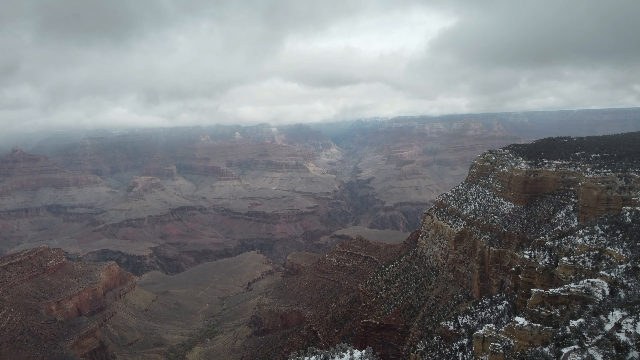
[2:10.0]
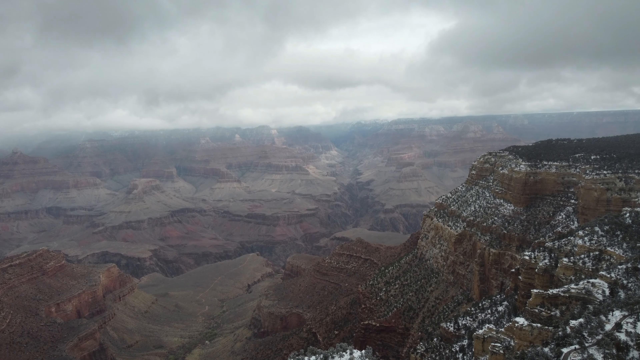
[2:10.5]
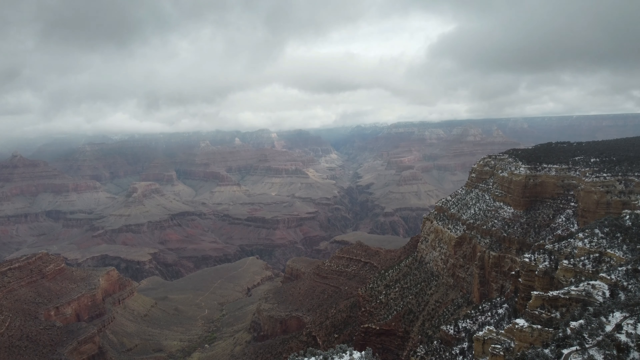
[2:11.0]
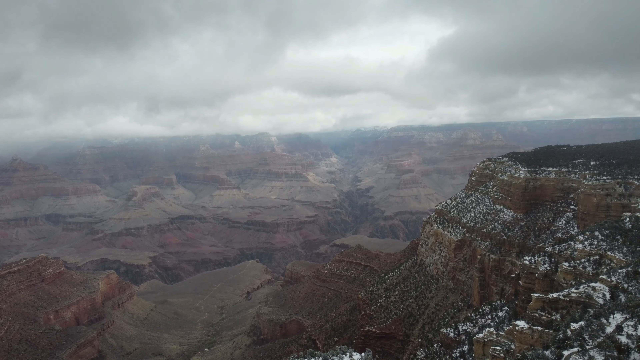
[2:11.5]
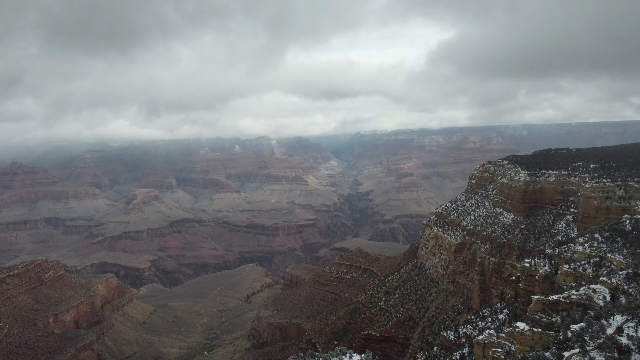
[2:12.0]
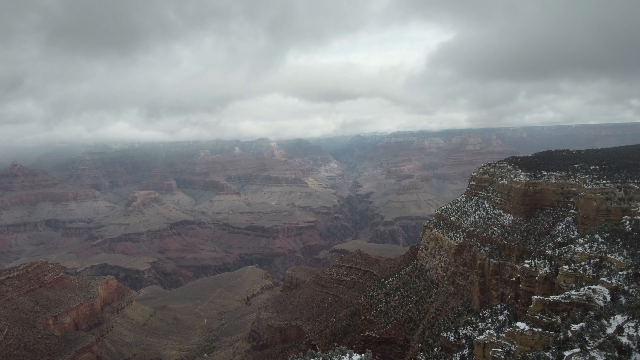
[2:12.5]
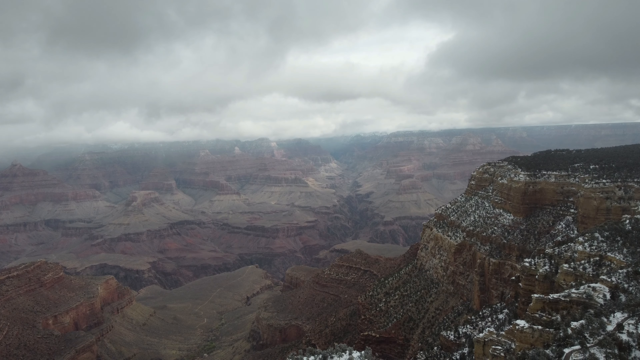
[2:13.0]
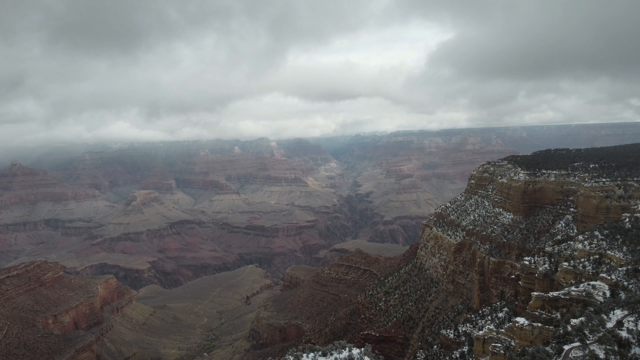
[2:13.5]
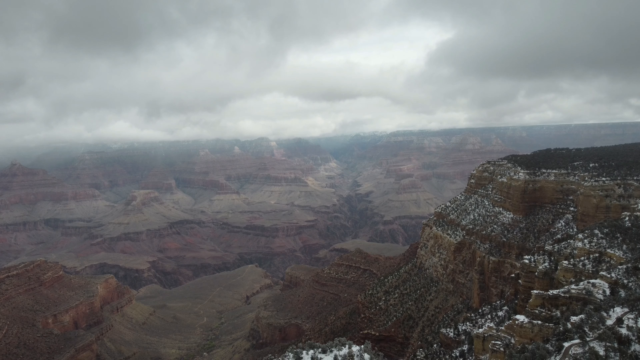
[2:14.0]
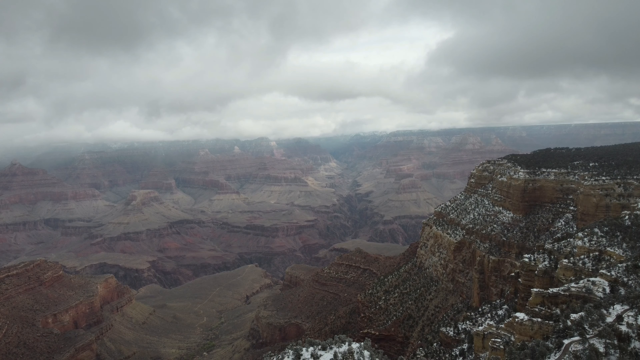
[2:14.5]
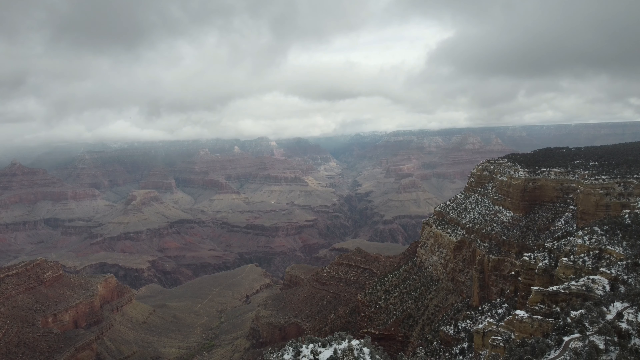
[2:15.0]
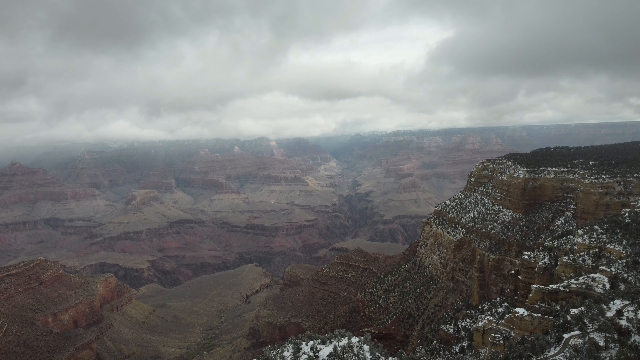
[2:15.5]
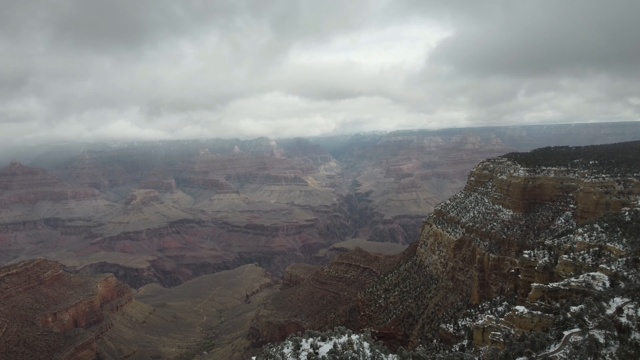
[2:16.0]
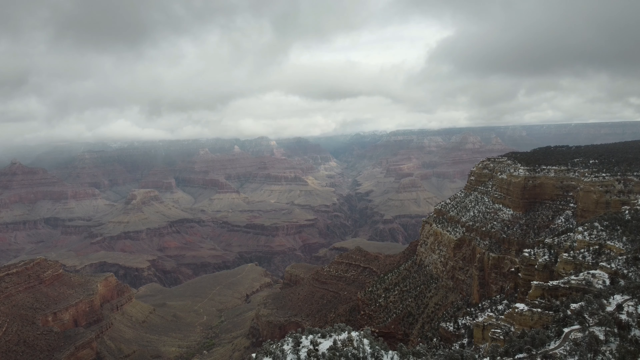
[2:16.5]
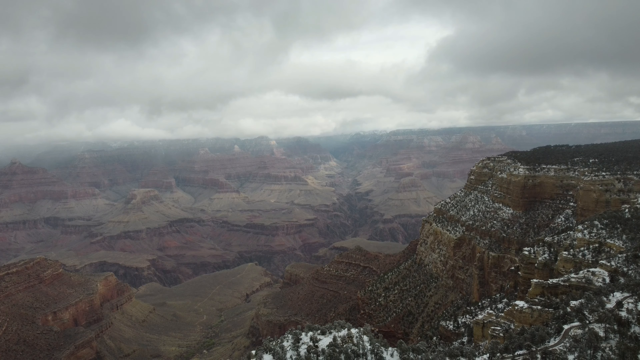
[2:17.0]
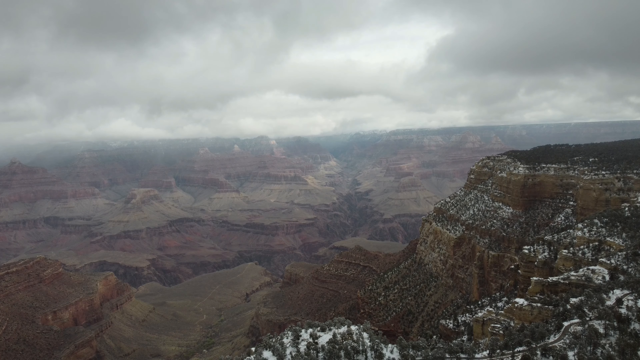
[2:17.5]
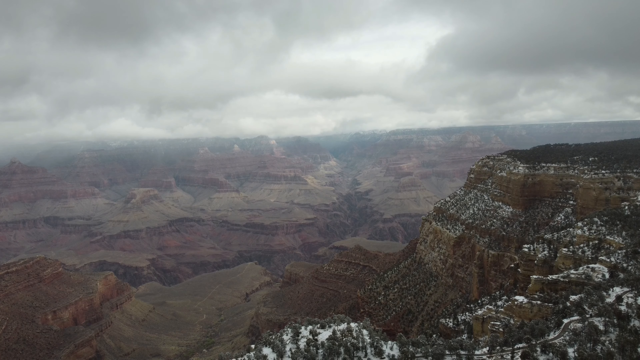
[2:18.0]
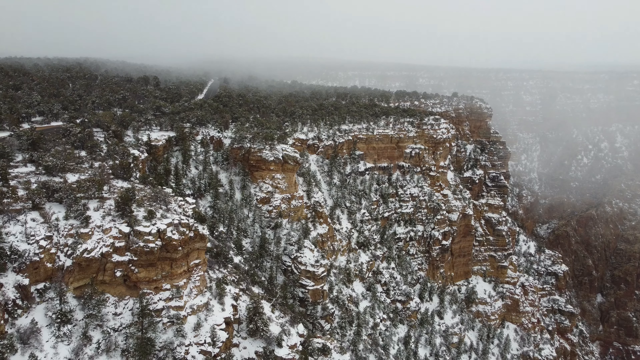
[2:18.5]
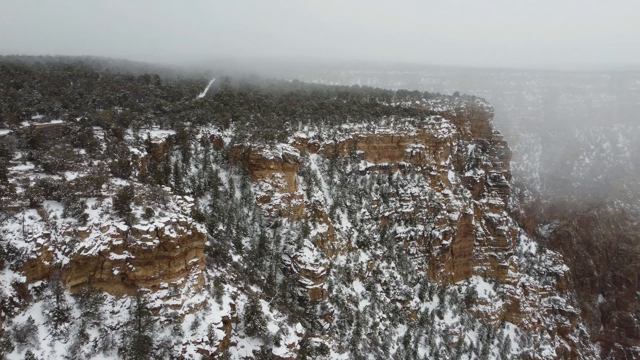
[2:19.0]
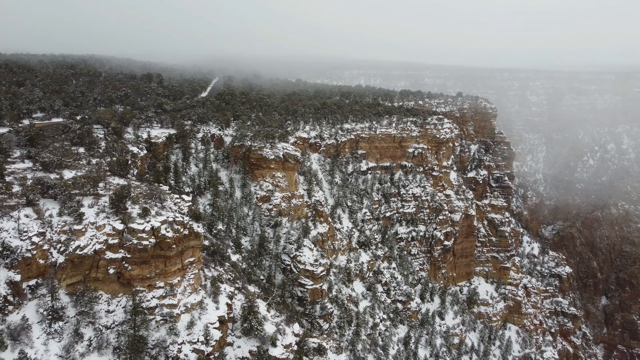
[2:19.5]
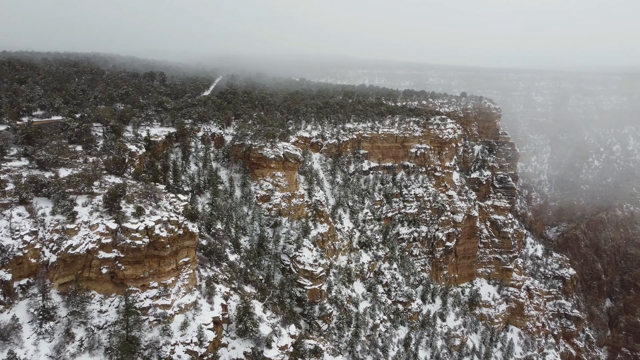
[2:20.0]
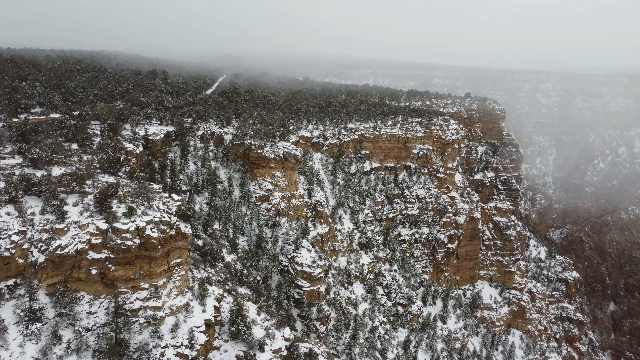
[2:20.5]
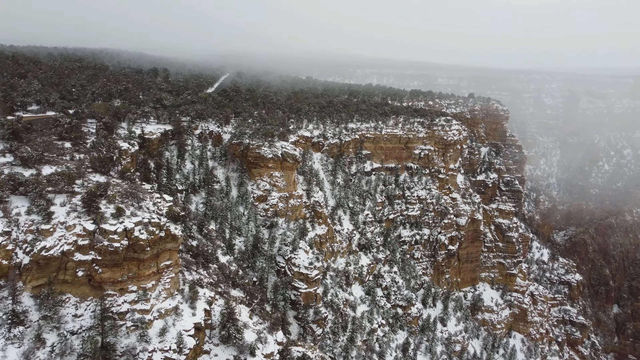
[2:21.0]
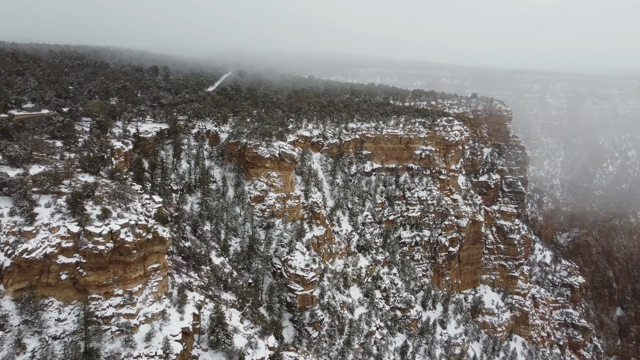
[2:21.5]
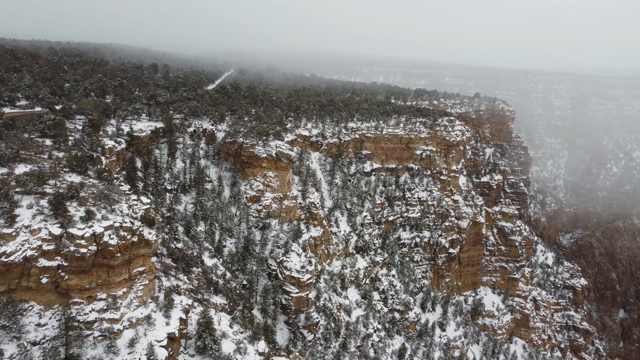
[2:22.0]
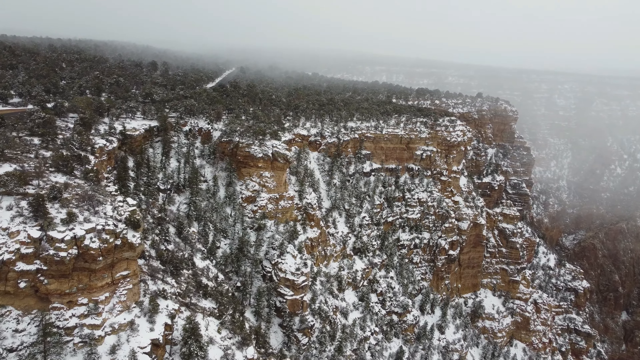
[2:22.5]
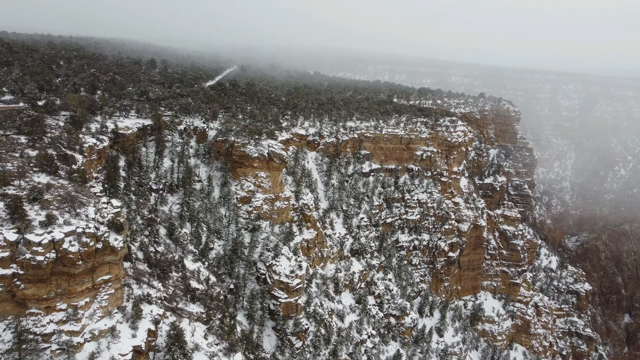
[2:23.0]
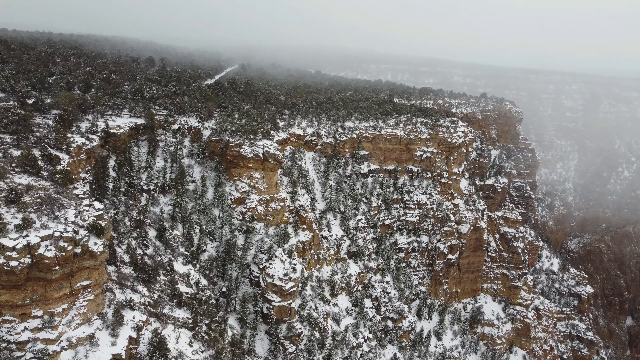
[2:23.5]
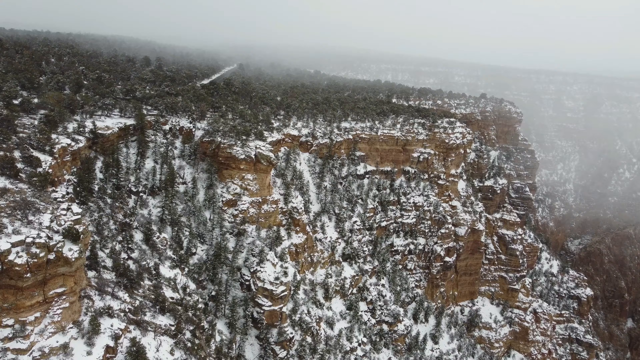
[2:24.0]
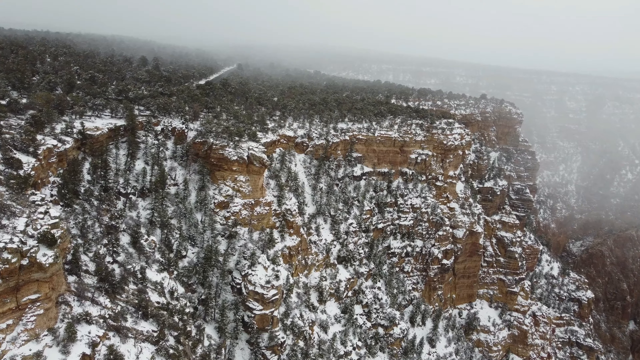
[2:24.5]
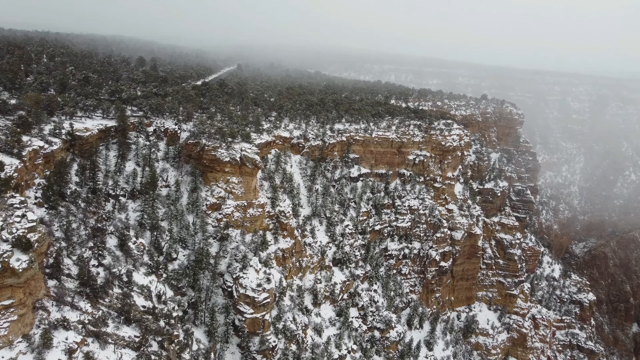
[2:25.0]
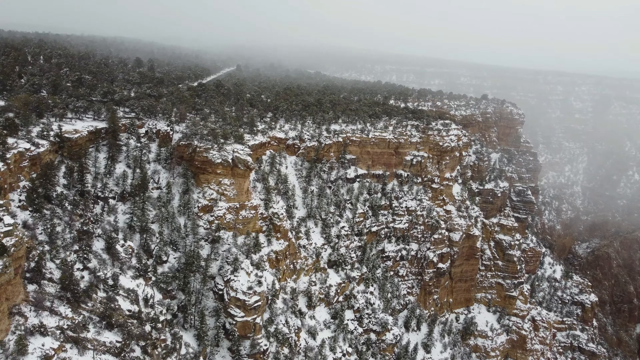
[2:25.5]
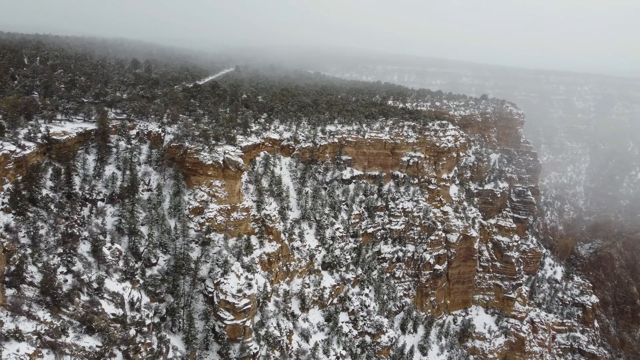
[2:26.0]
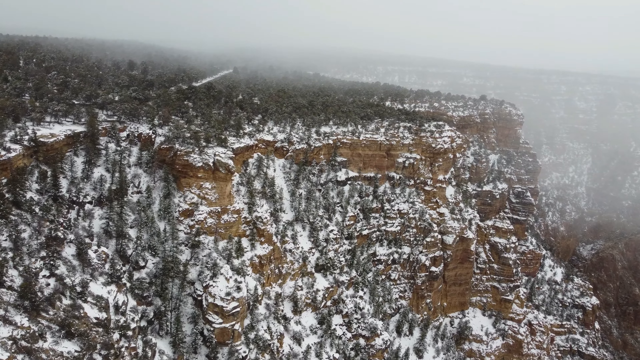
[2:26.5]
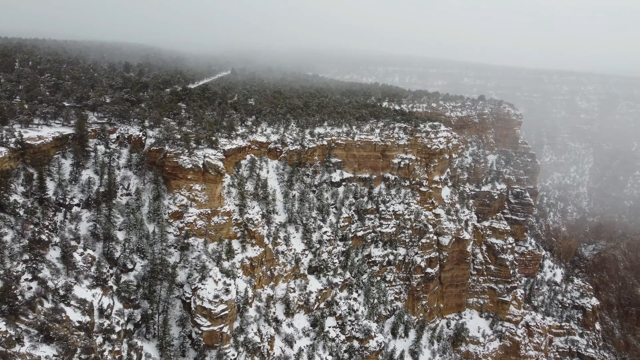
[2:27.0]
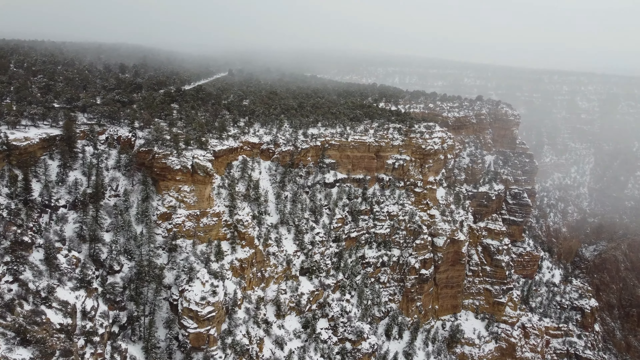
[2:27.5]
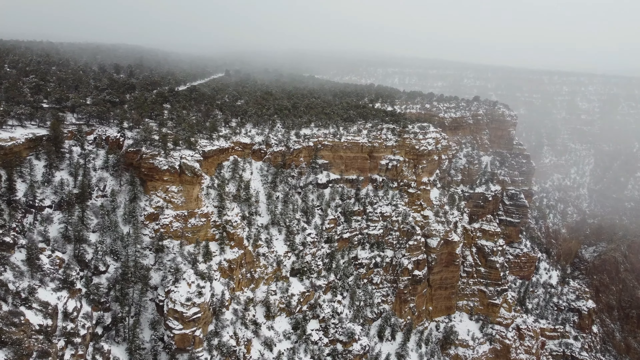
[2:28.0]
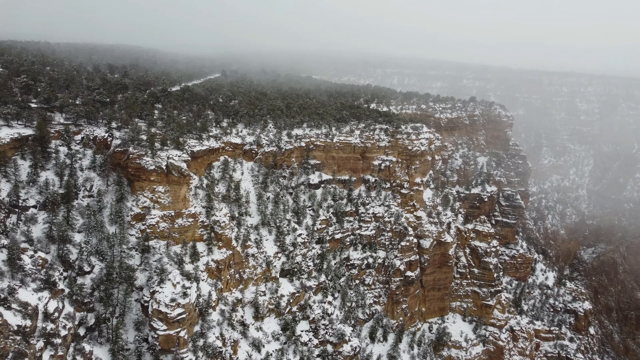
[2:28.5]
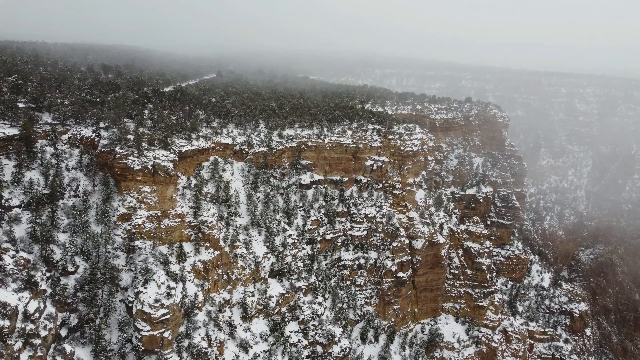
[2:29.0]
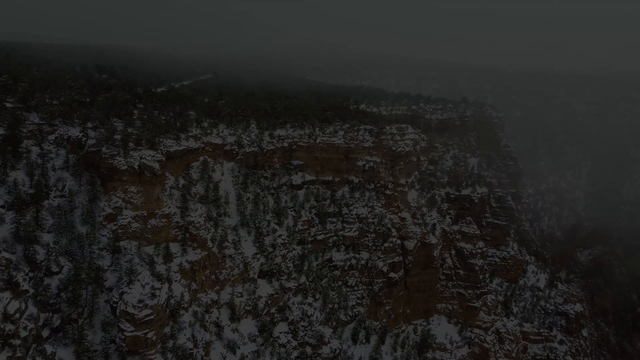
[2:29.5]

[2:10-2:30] The shot is at the left side of what looks like a forest or part of a forest on top of a mountain, and this part of the mountain is very snowy. The drone slowly lands slightly. A shot shows the gap of the Grand Canyon visible in the distance, slightly blurry, while the focus is on the snowy mountaintop on the right side of the screen. Another shot shows the mountain looking like it has collapsed, or that parts of it have collapsed. The camera pans forward to show parts of the mountain that are still dry, with pieces of rock.